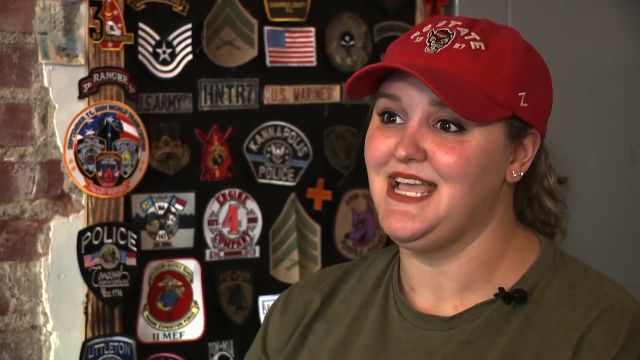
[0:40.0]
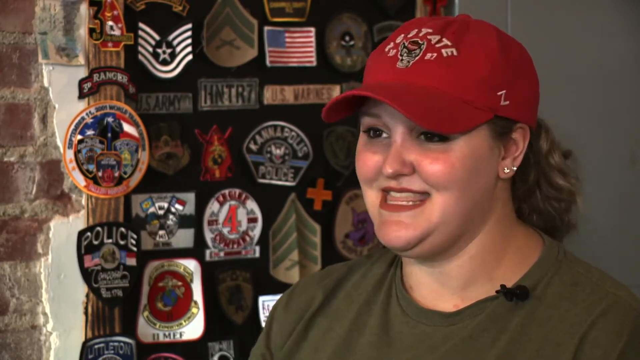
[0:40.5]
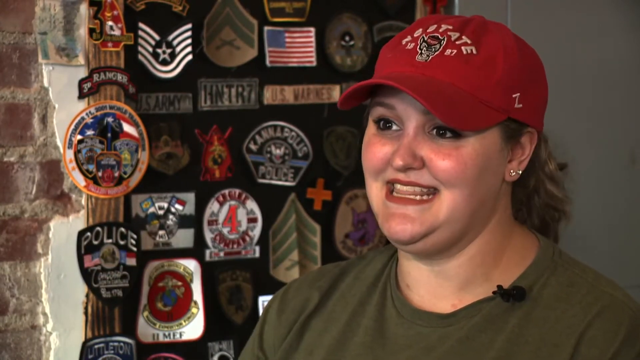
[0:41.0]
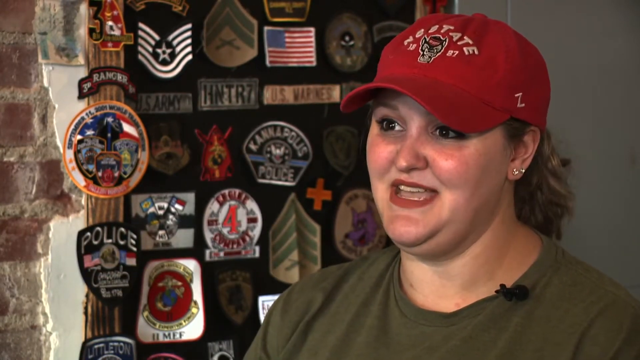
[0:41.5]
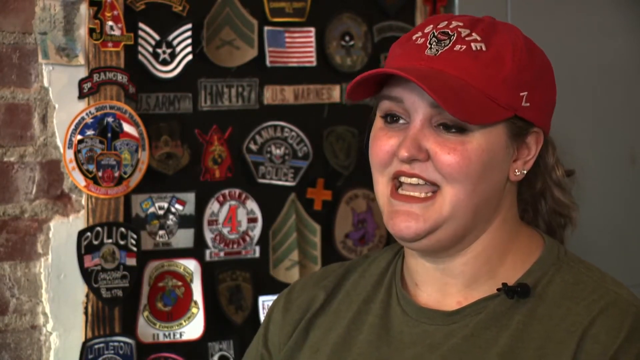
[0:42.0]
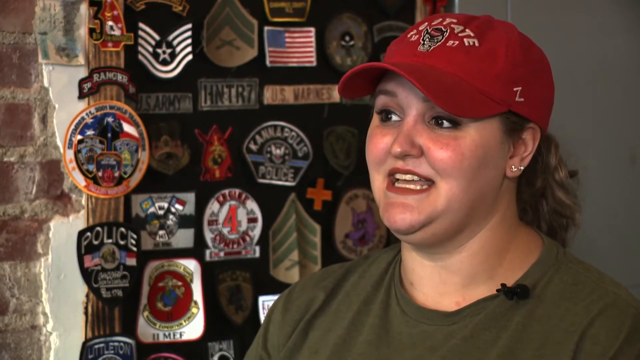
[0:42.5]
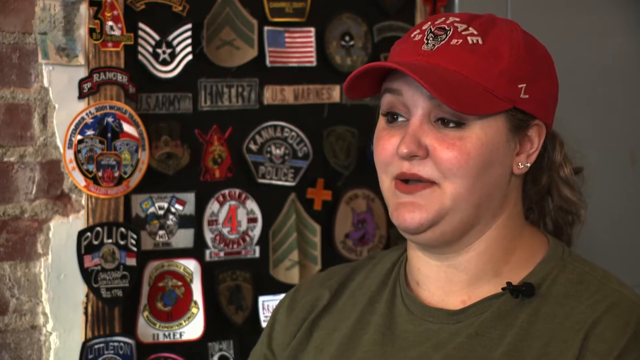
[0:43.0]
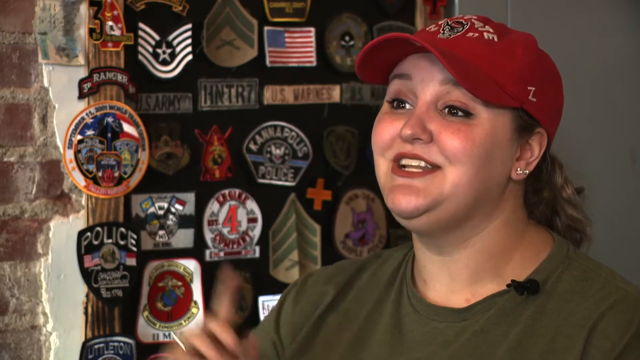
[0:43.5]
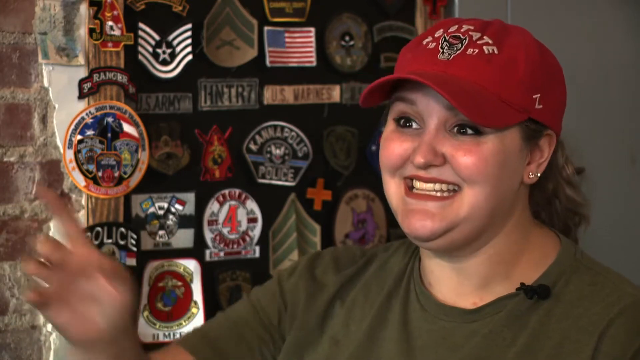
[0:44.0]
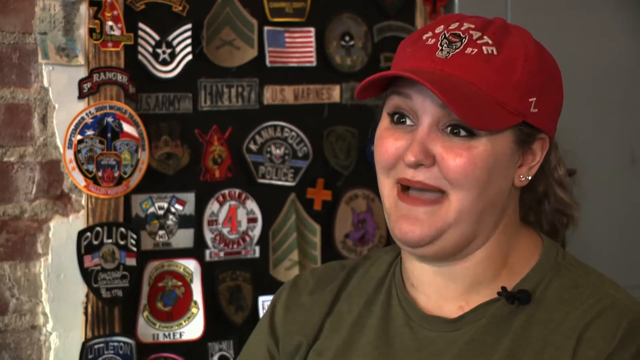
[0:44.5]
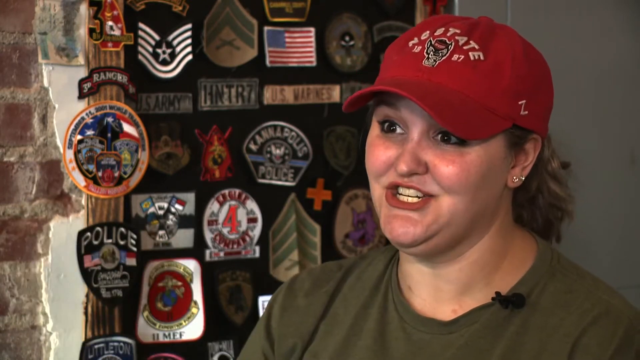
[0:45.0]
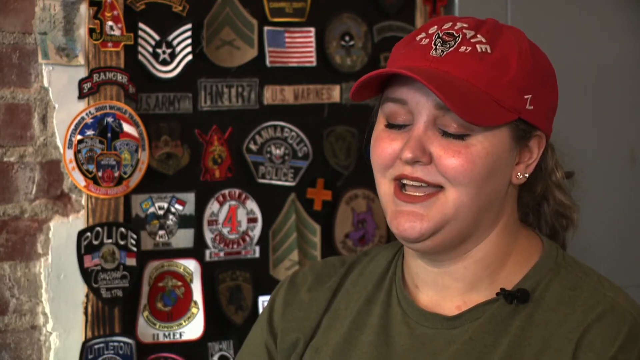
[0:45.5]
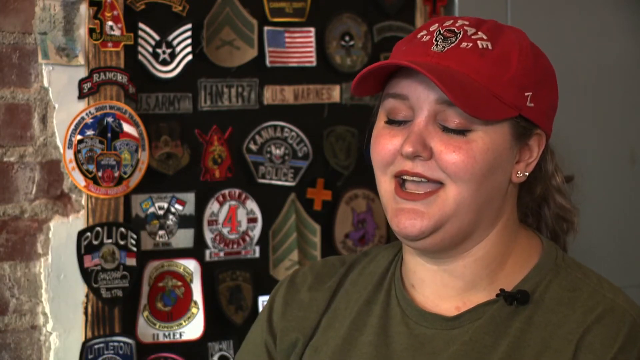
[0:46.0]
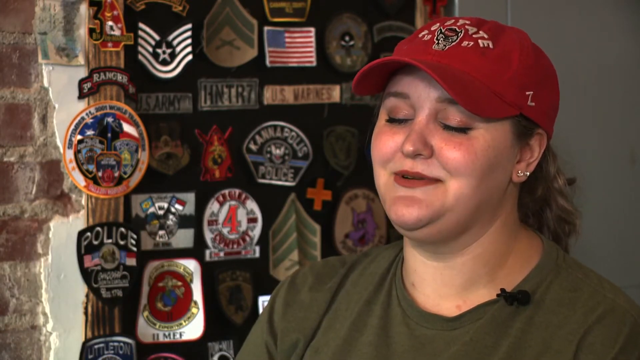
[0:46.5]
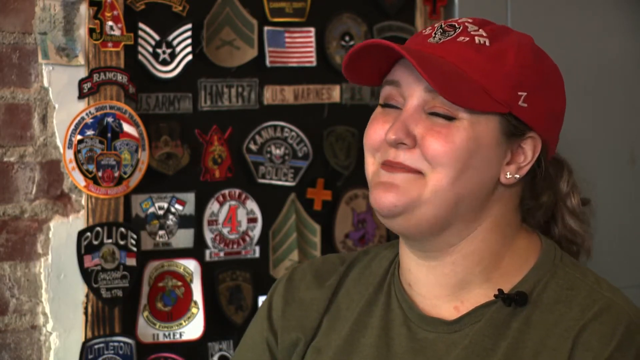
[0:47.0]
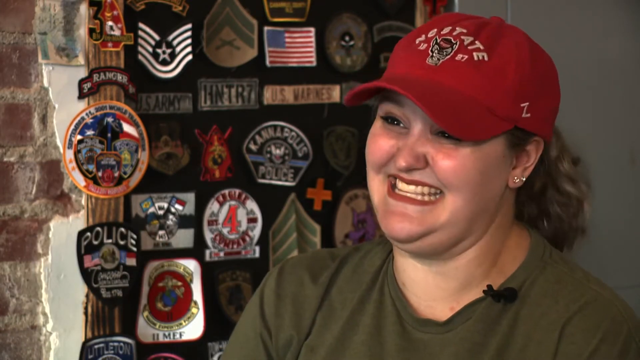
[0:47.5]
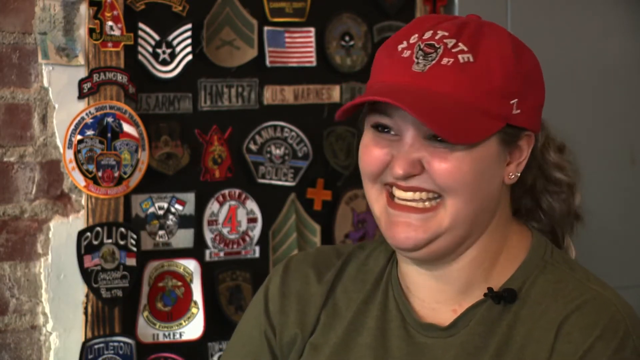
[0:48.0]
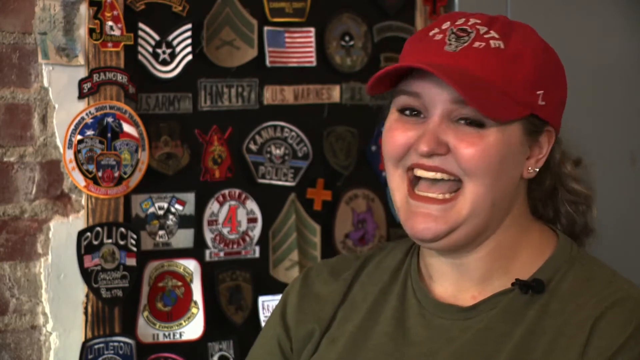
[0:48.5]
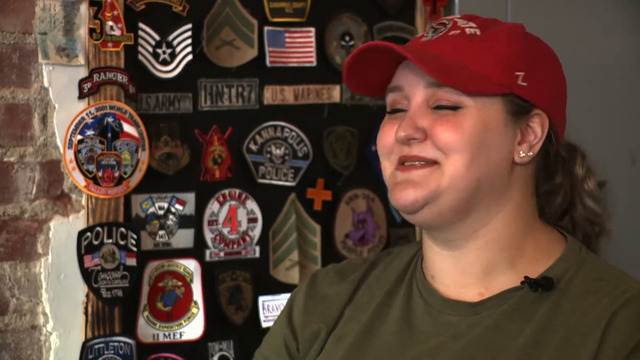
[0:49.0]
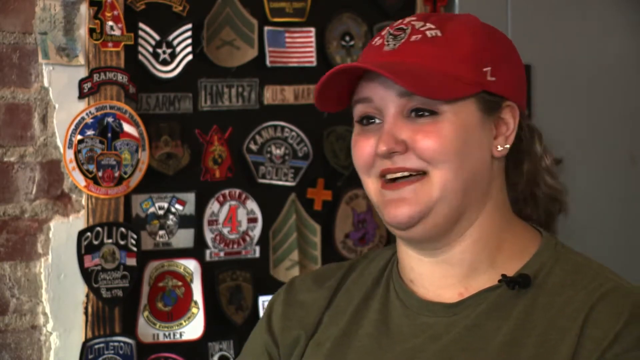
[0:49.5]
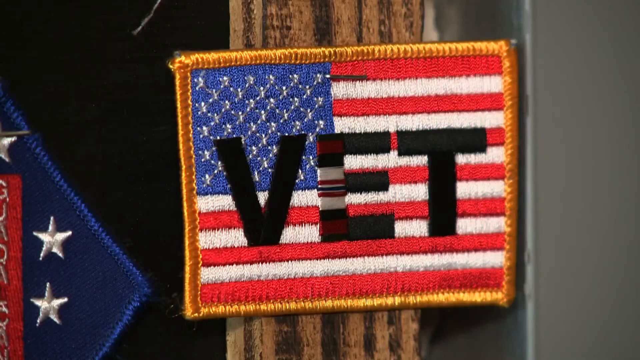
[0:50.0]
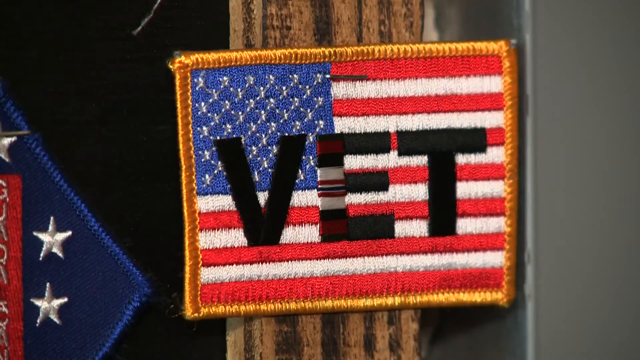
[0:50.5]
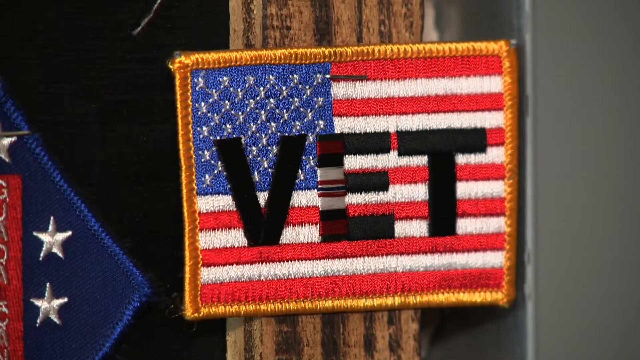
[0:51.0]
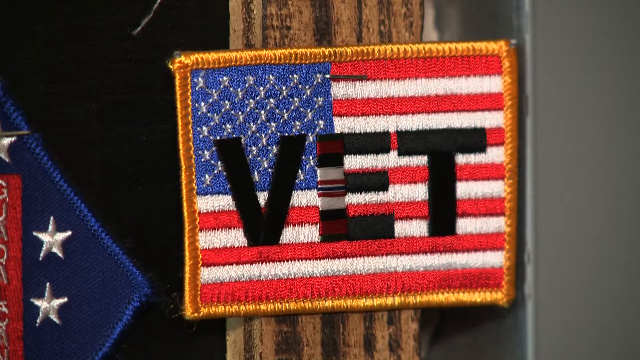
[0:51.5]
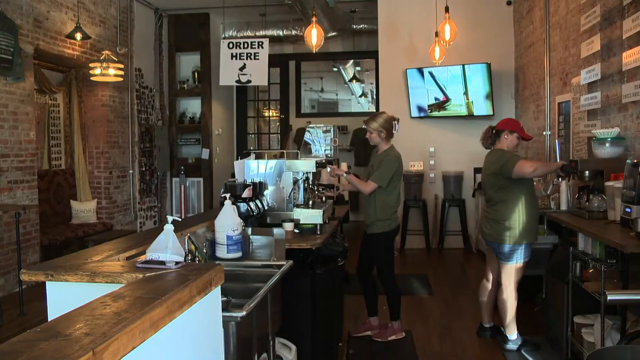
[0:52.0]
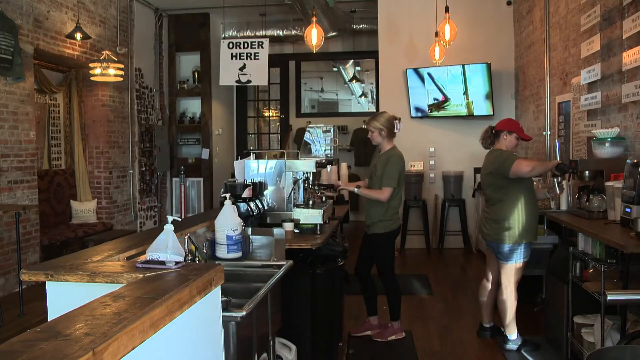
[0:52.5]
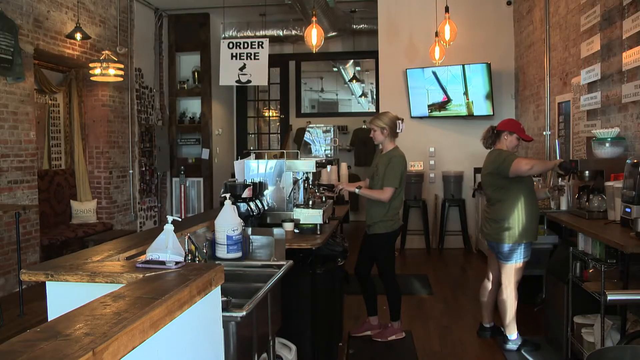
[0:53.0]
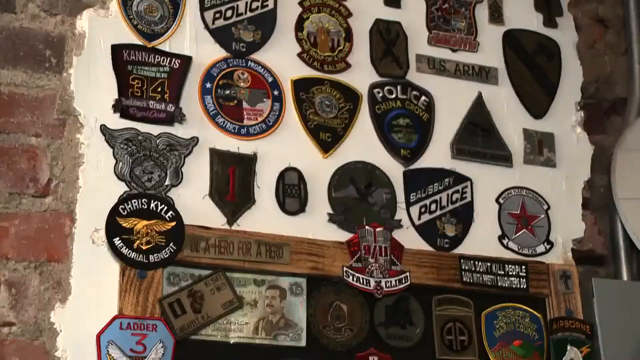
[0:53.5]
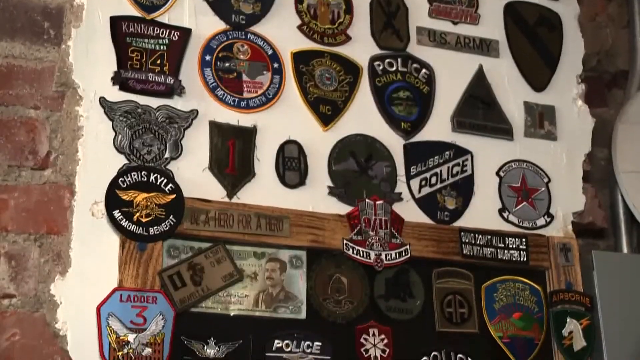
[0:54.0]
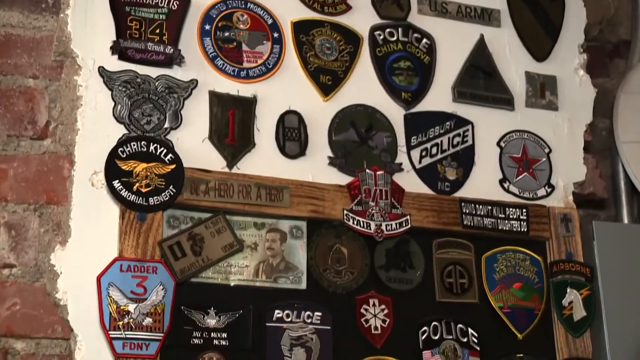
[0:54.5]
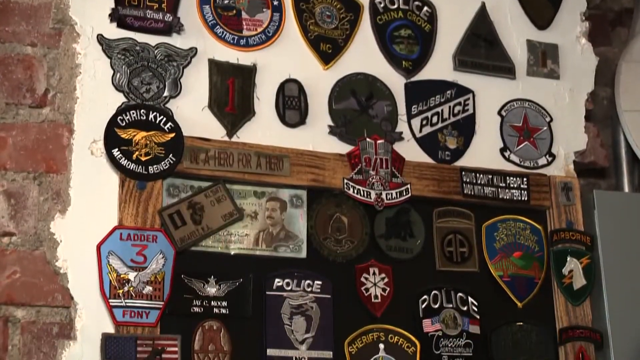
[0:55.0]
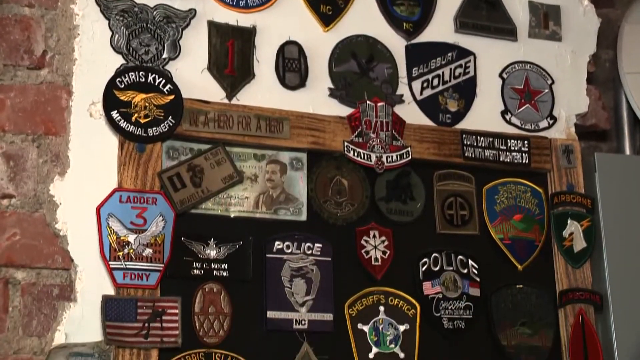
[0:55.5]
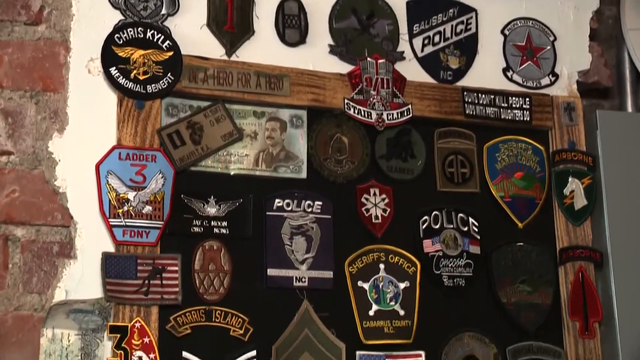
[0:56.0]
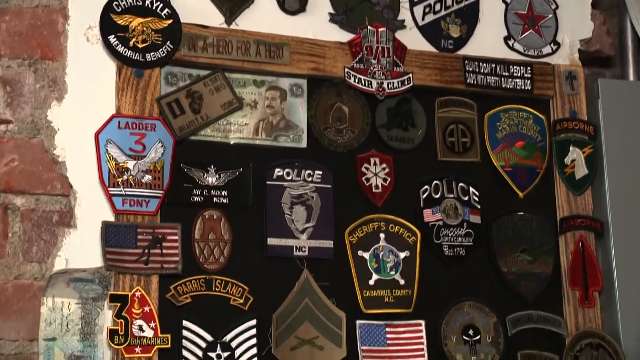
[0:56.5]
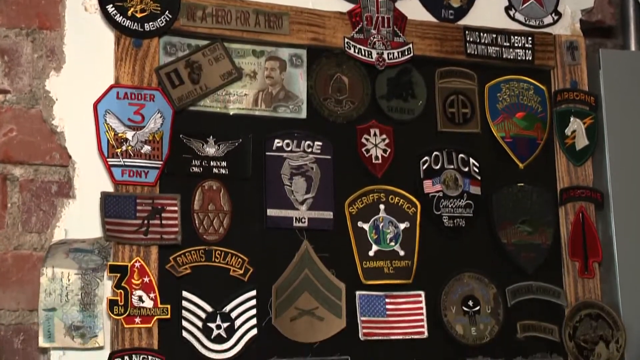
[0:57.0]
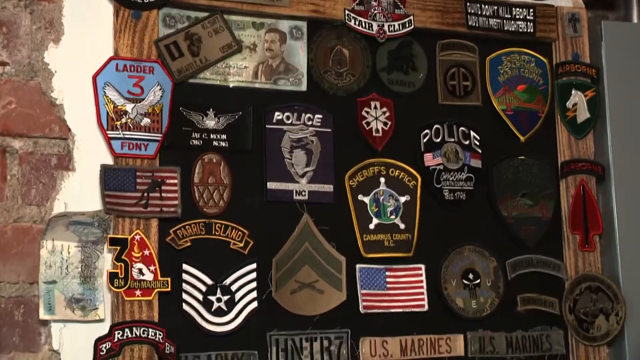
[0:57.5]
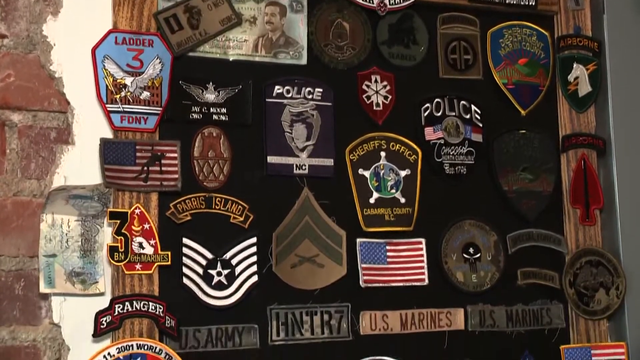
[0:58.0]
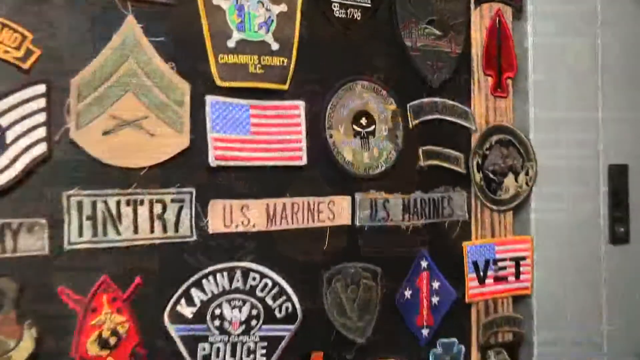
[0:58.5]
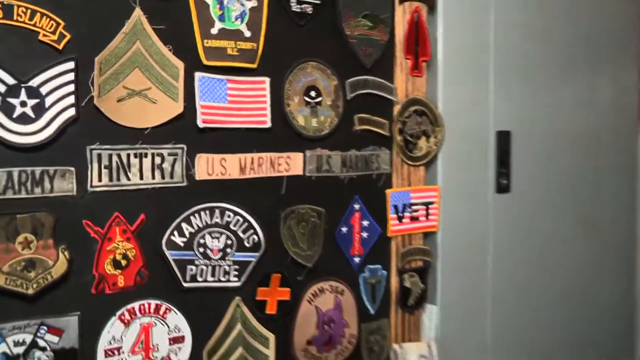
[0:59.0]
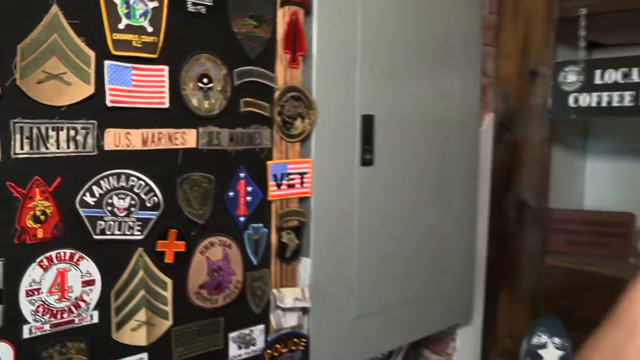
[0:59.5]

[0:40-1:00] The woman is still being interviewed in the coffee shop. Her red cap is now clearer and reads "NC State 1987". She stands just in front of badges plastered on the wall: a police badge, a ranger badge, a US Army badge, a US Marines badge, an American flag, and several others that are not identified. There is also an American flag with the letters "VET" written on it, and what appears to be a monetary note plastered on the wall. One badge reads "be a hero for a hero", another reads "guns don't kill people" with a further line of writing underneath that cannot be made out, and another reads "sheriff's office".